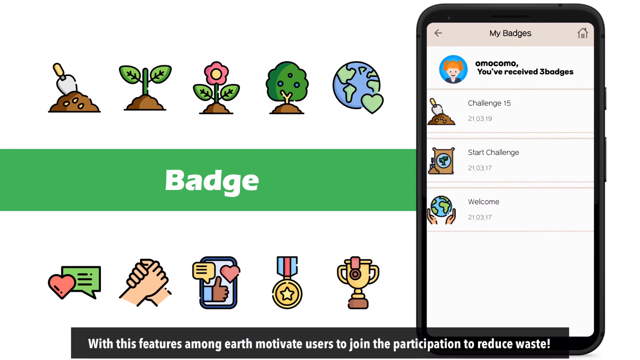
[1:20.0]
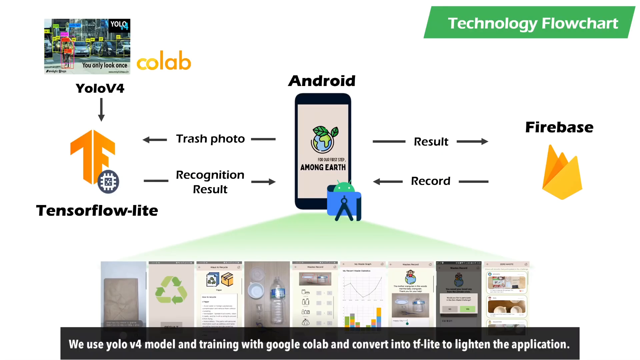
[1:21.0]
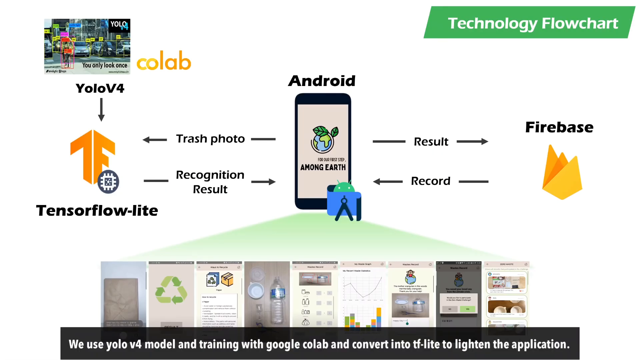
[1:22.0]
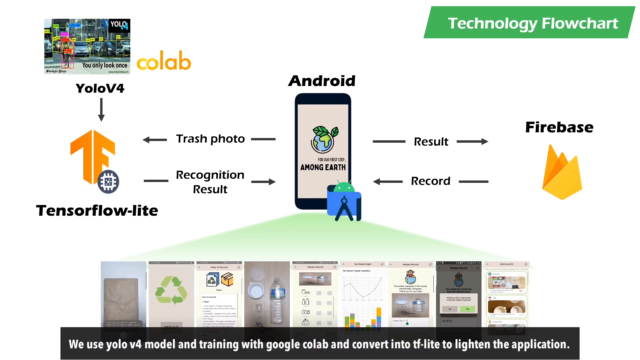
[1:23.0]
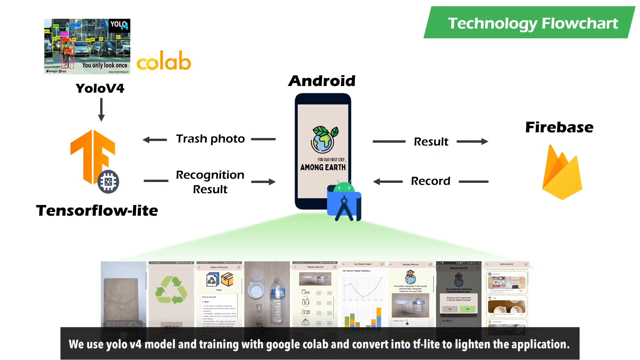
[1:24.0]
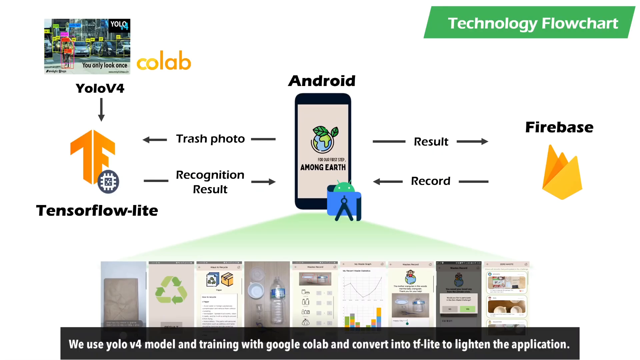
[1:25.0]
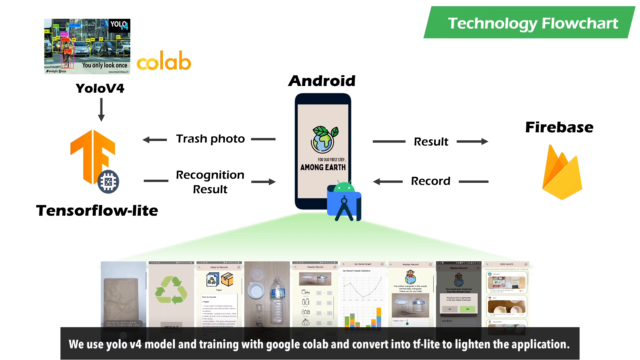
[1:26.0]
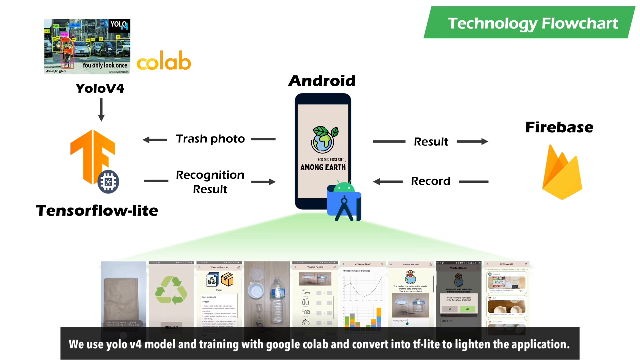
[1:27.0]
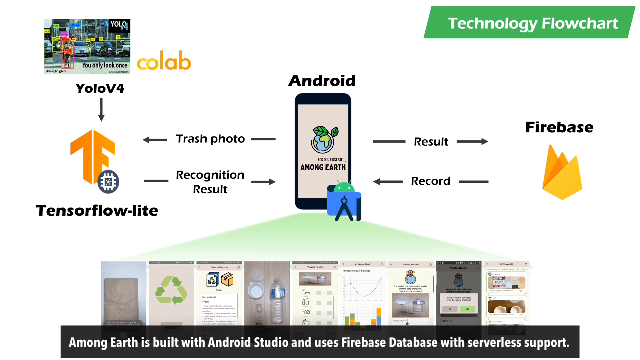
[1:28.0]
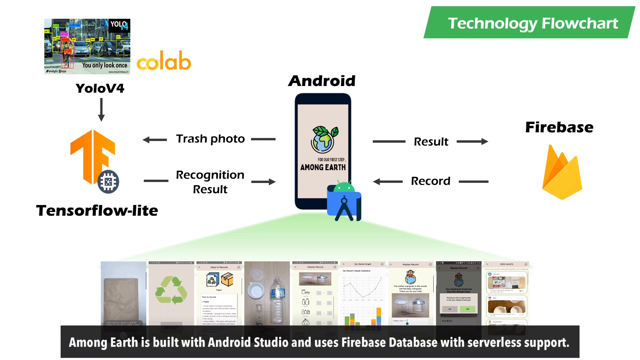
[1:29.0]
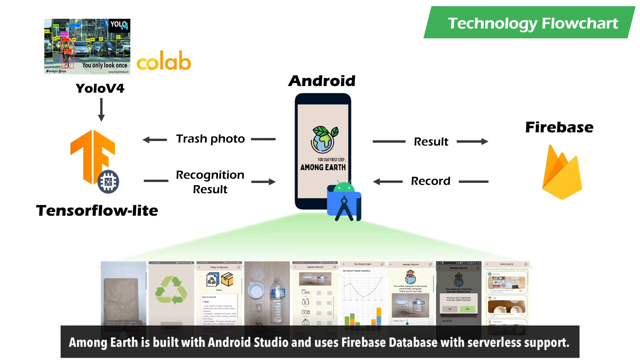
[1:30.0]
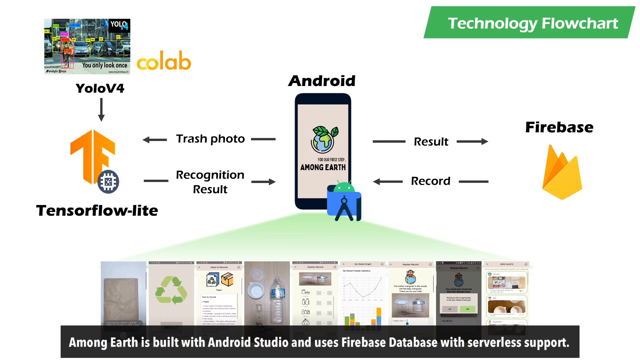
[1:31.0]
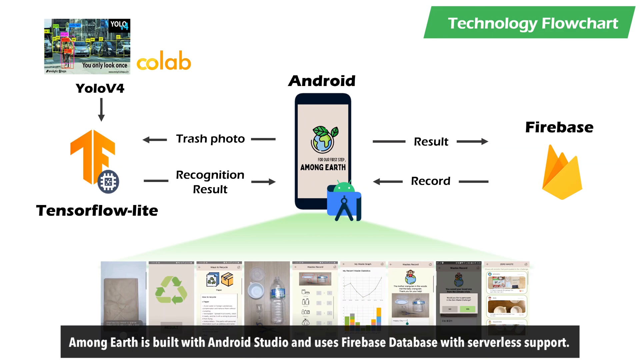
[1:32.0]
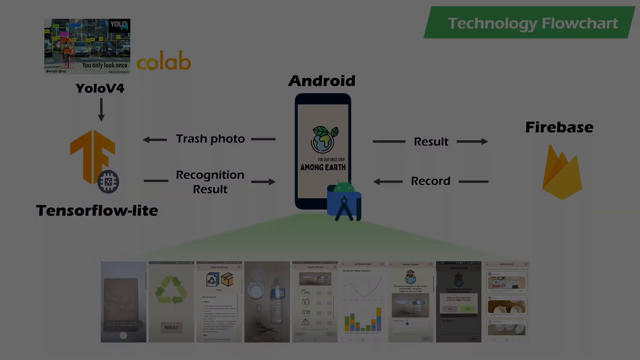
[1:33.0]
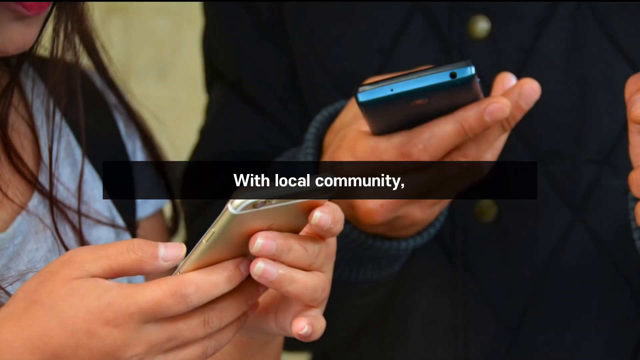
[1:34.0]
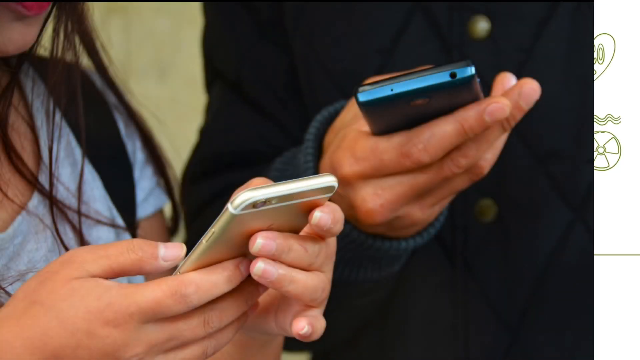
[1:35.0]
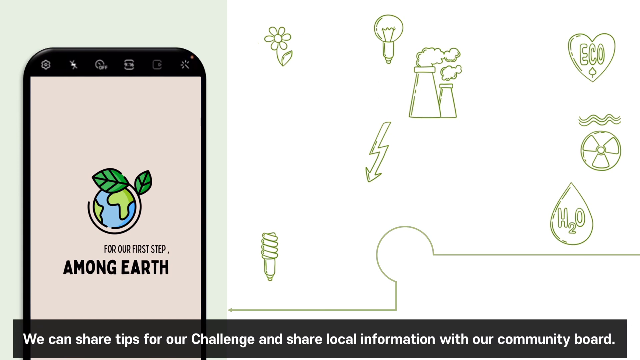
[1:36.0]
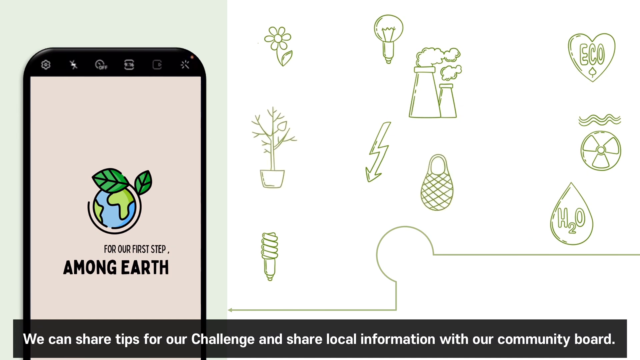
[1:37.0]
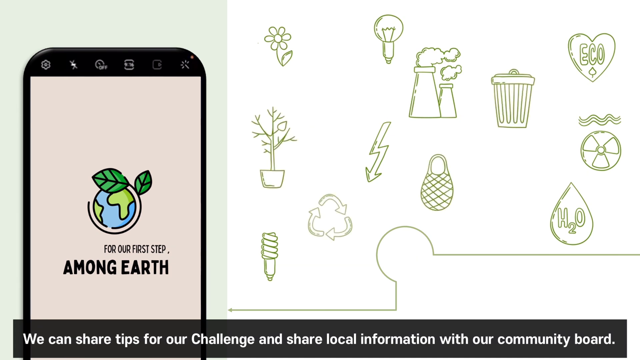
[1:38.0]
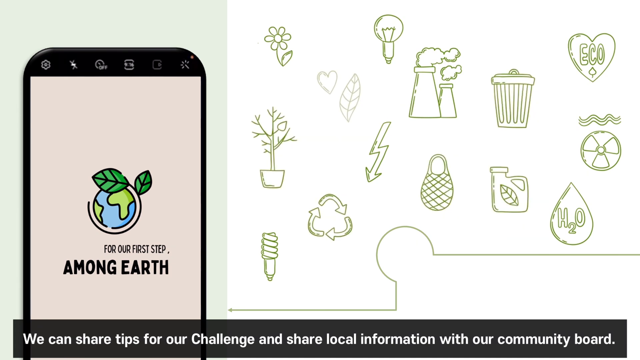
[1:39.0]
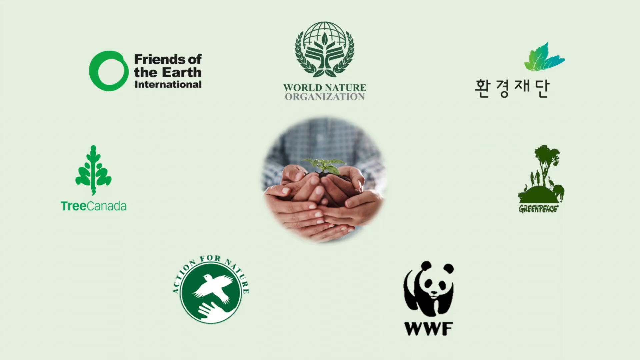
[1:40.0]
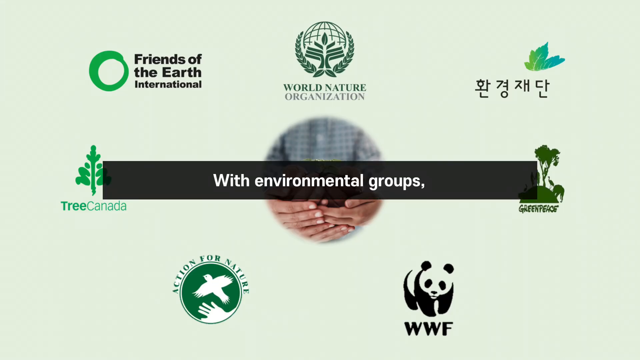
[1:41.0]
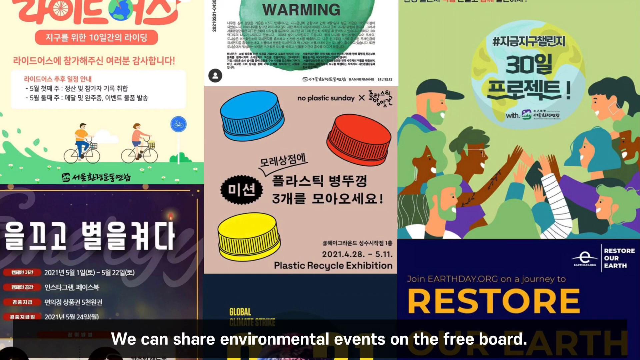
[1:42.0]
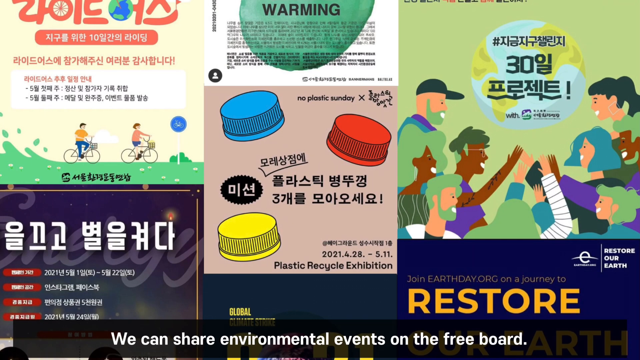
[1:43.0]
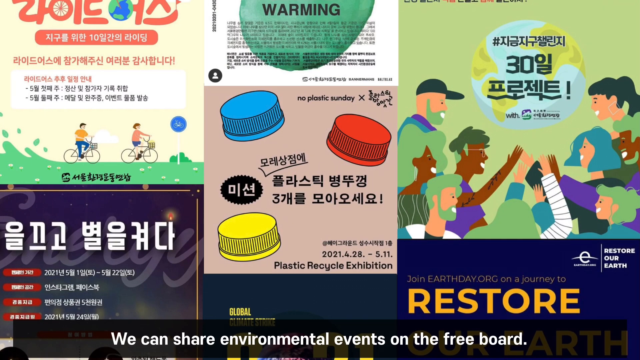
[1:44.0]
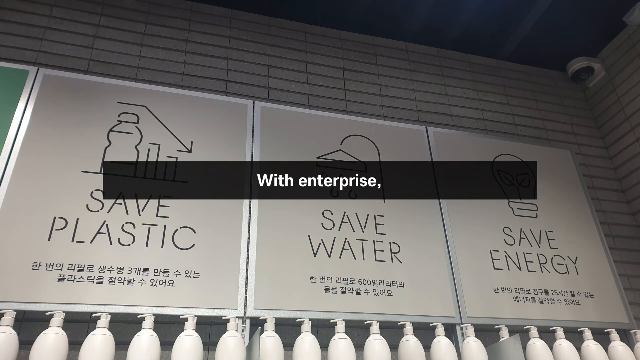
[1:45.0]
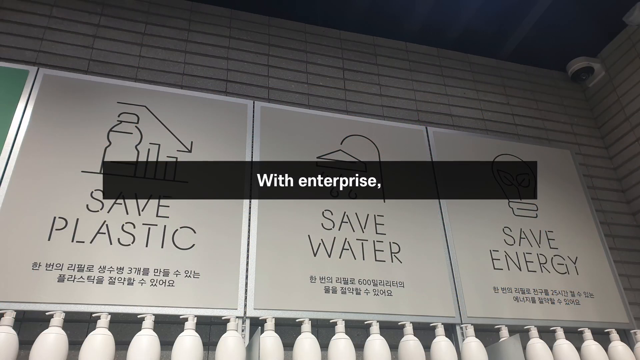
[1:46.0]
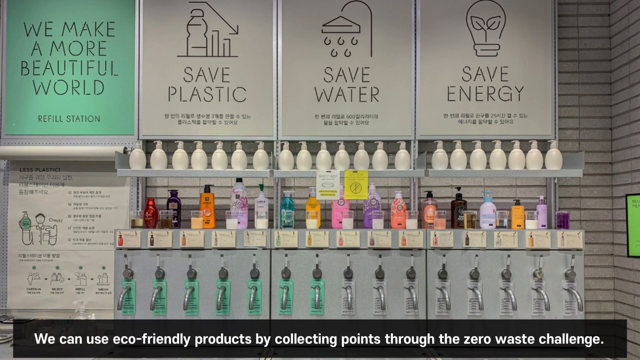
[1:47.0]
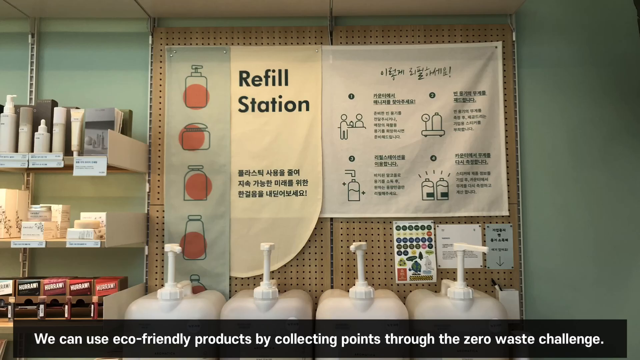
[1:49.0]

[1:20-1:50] What looks to be an app on a phone shows different icons: a shovel digging, a sack below it, and a globe with hands around it below that. To the right of the shovel icon it says "challenge 15", to the right of the sack icon "start challenge", and to the right of the globe icon "welcome". An icon at the very top probably represents the user, named Omocomo, and the text reads "Omocomo, you've received three badges." The next scene shows different icons, such as a technology flow chart, at the top right corner, and an Android phone at the very center. The Android phone's display says "among earth" with the globe and the leaf wrapped around it. To the right of the phone are the words "fire base" with what looks to represent fire below them, and to the left are the words "YOLOv4" and "tensor flow light".